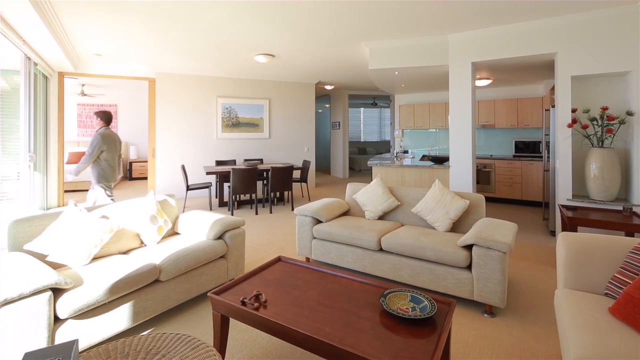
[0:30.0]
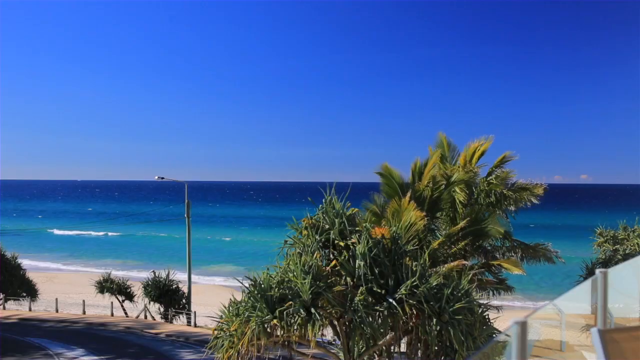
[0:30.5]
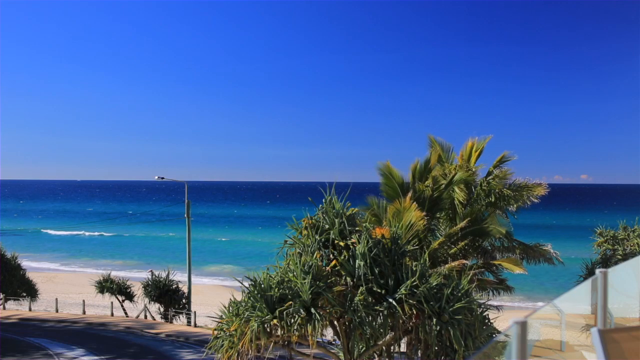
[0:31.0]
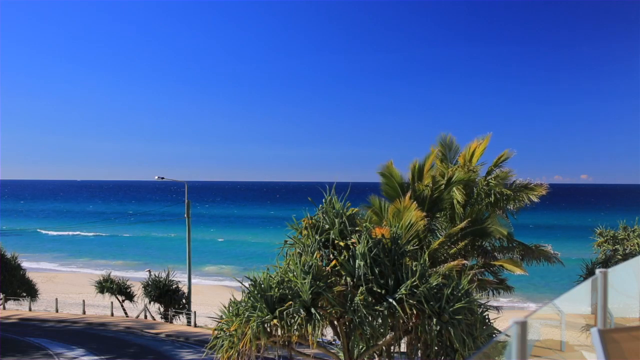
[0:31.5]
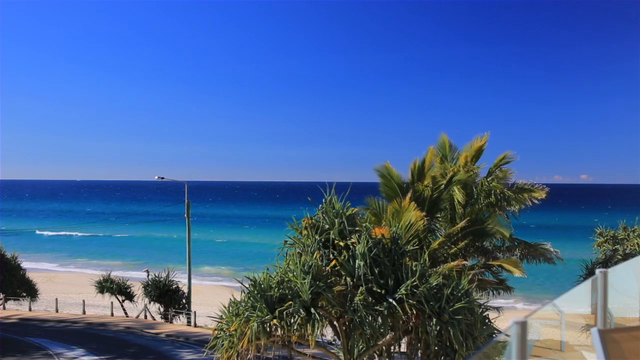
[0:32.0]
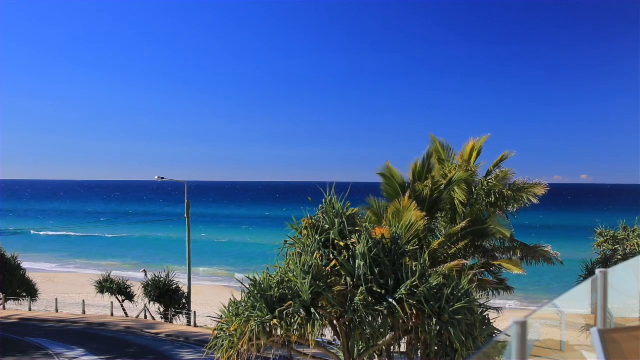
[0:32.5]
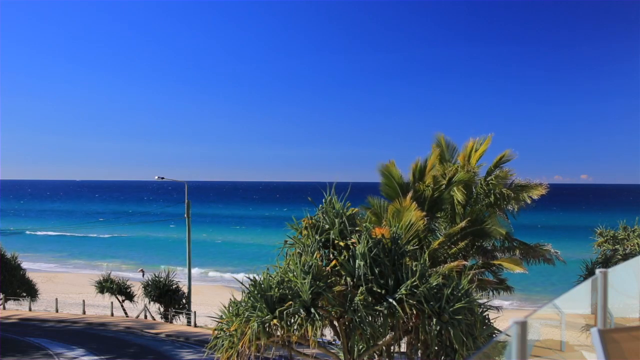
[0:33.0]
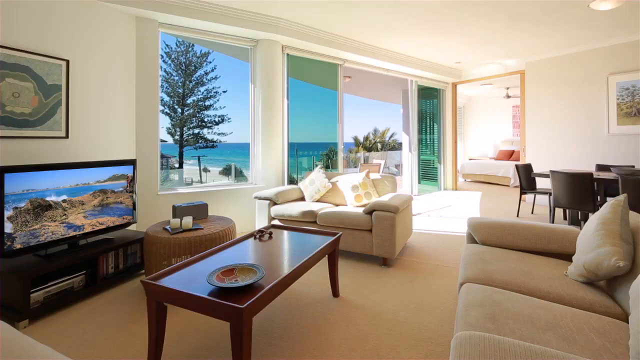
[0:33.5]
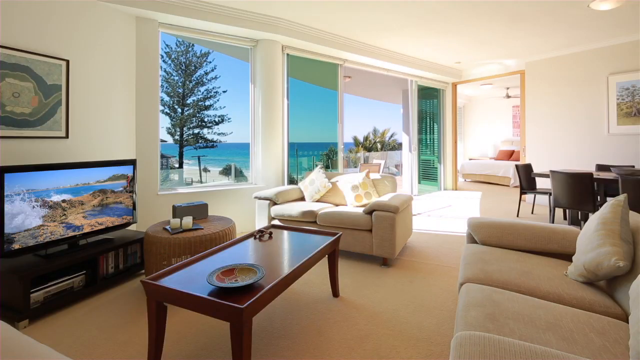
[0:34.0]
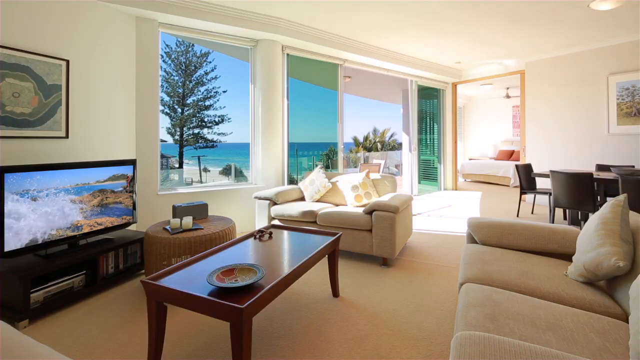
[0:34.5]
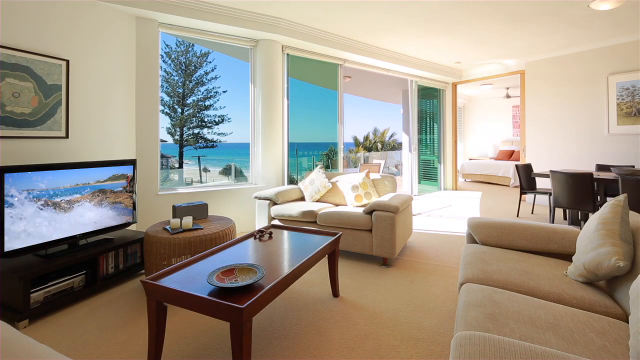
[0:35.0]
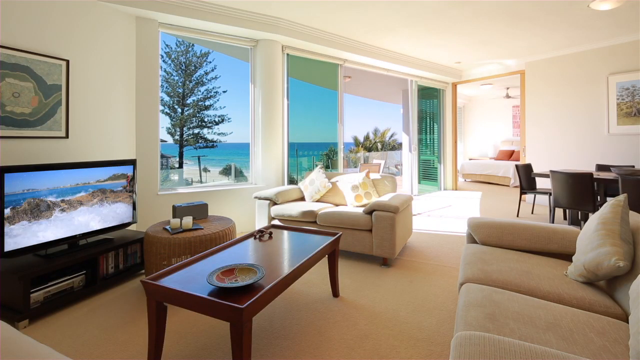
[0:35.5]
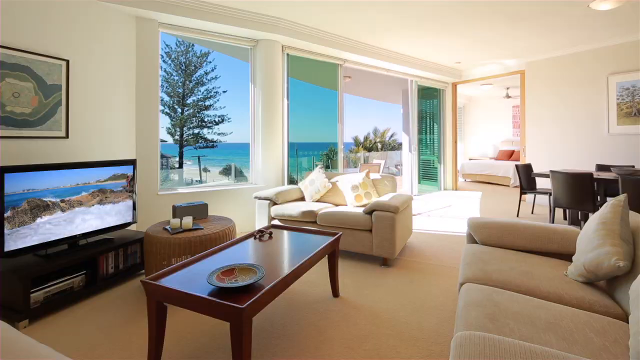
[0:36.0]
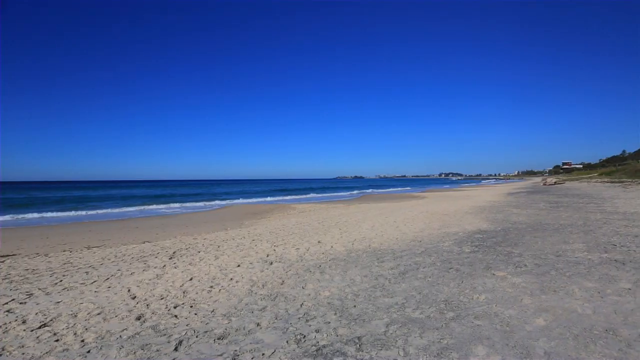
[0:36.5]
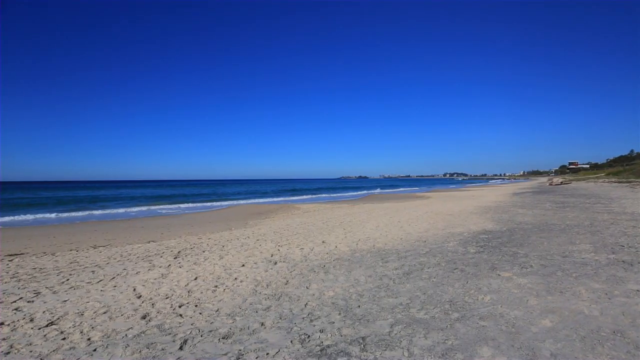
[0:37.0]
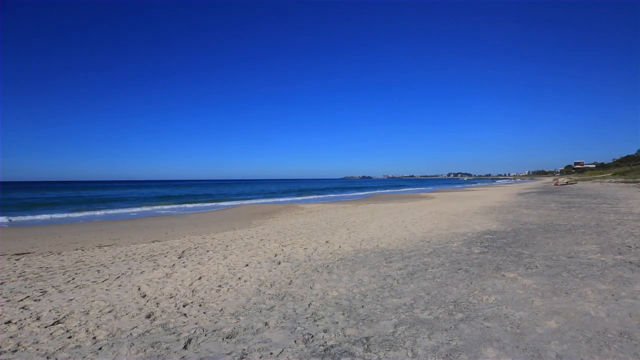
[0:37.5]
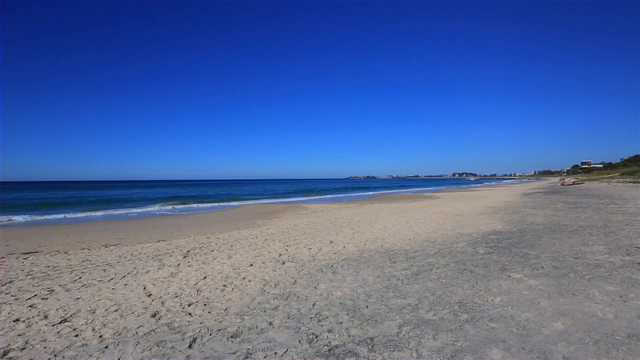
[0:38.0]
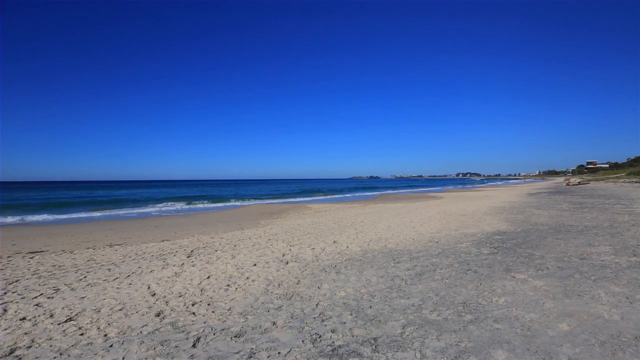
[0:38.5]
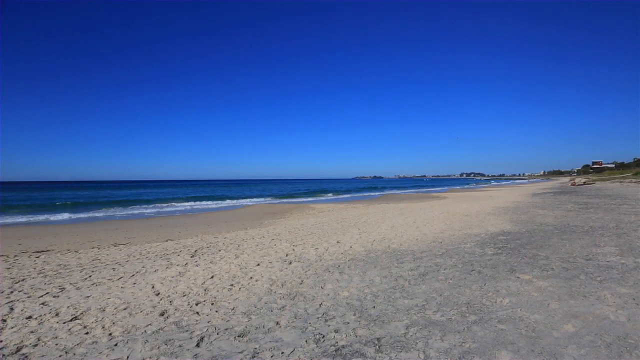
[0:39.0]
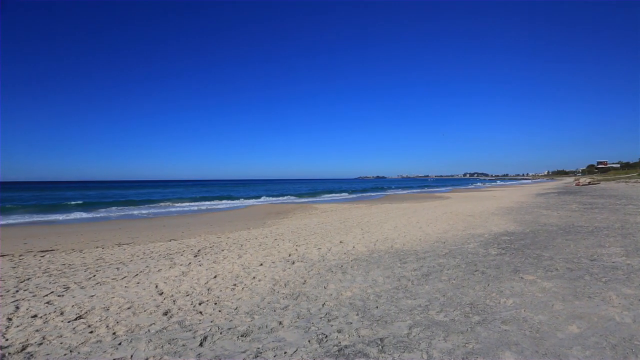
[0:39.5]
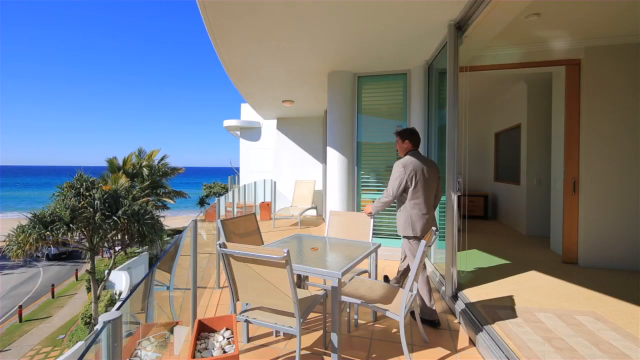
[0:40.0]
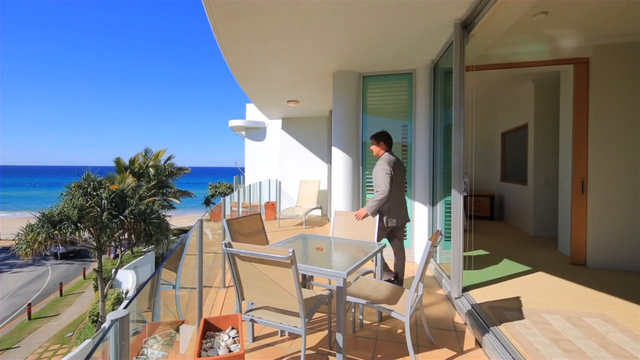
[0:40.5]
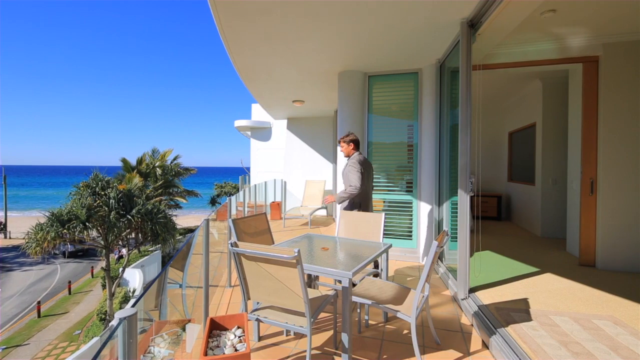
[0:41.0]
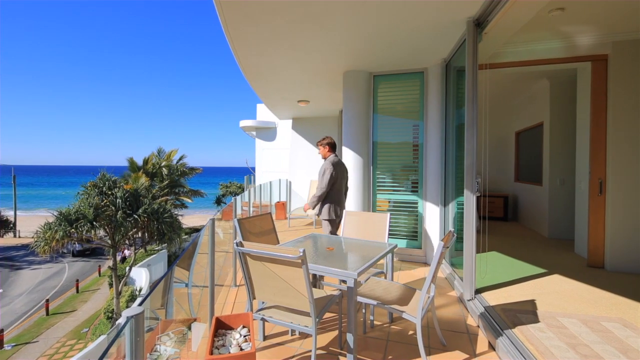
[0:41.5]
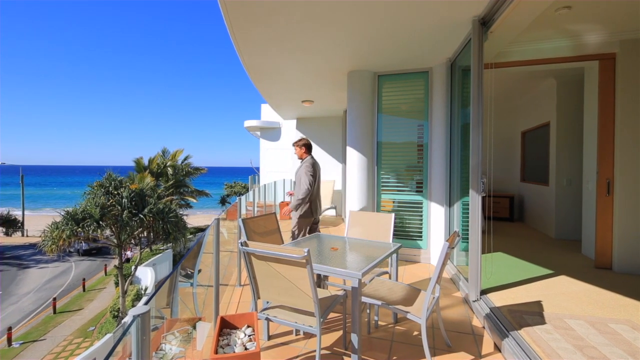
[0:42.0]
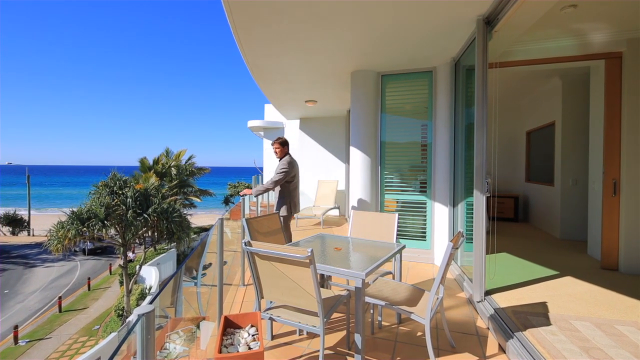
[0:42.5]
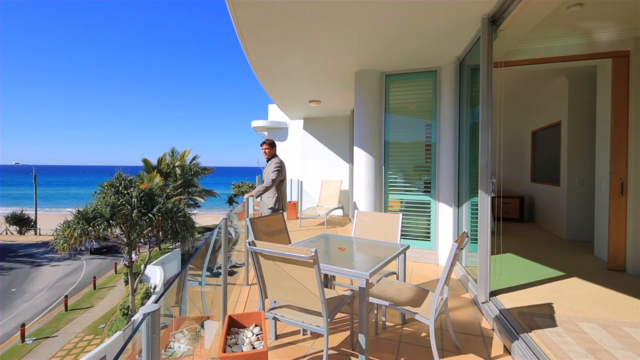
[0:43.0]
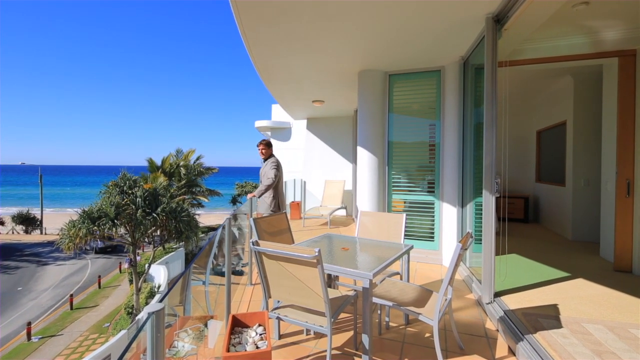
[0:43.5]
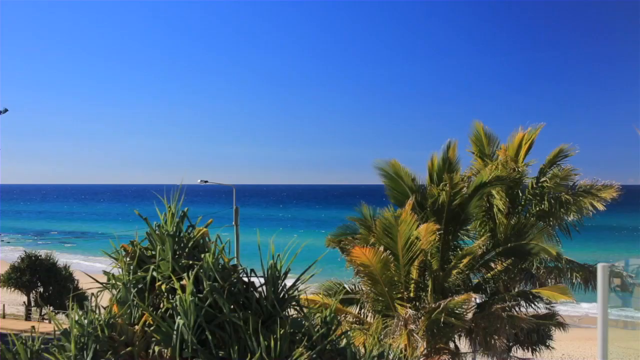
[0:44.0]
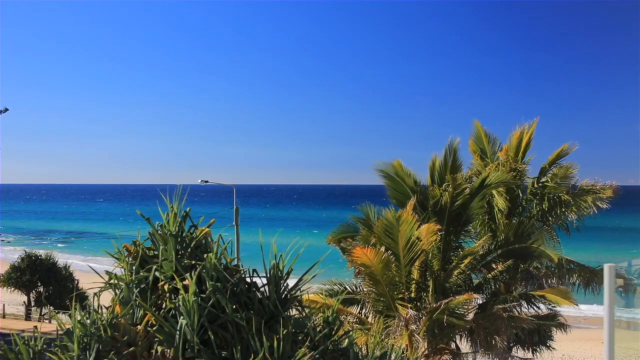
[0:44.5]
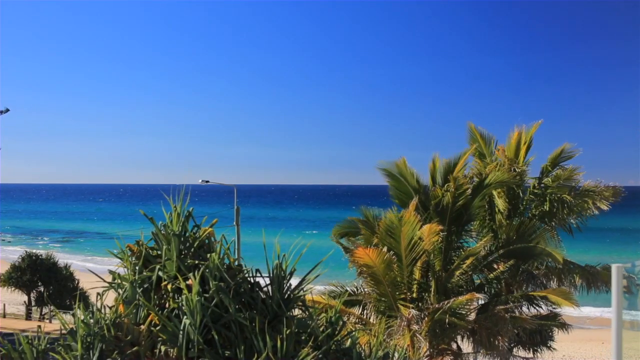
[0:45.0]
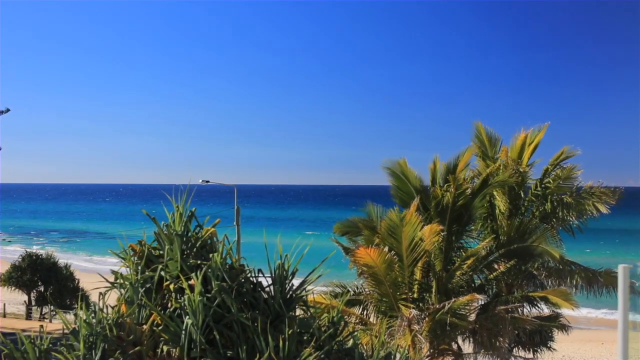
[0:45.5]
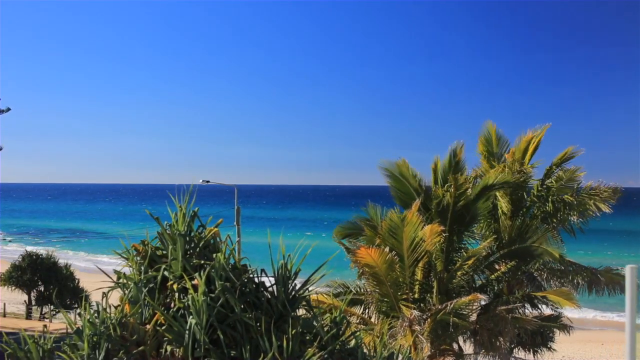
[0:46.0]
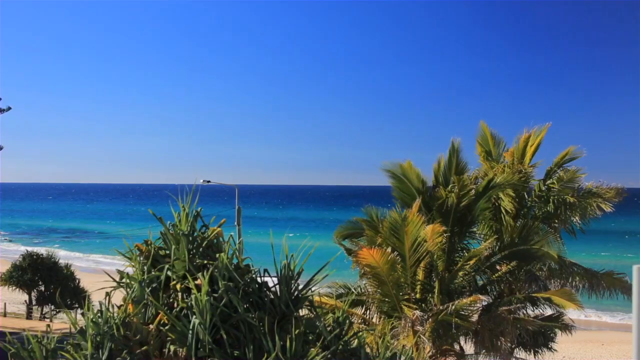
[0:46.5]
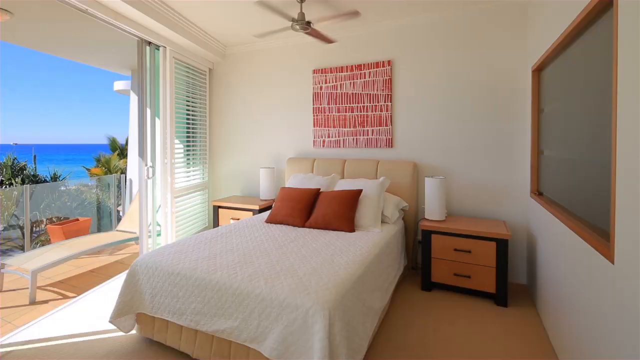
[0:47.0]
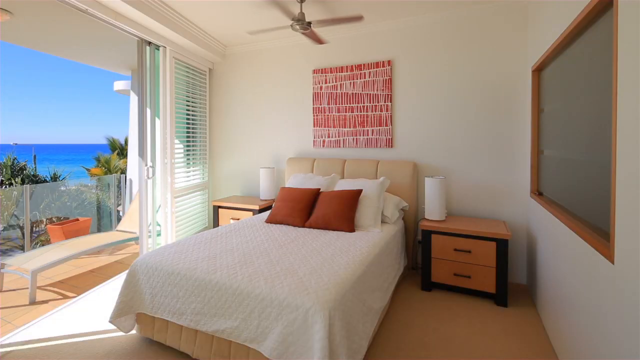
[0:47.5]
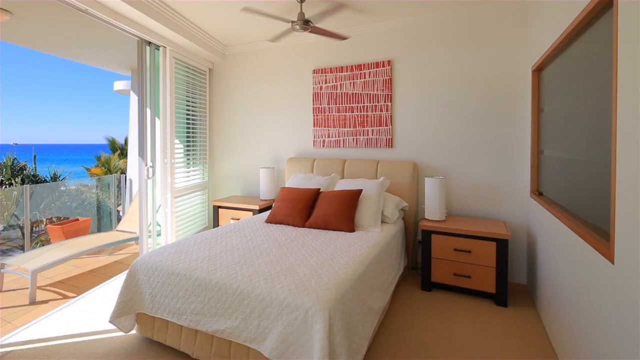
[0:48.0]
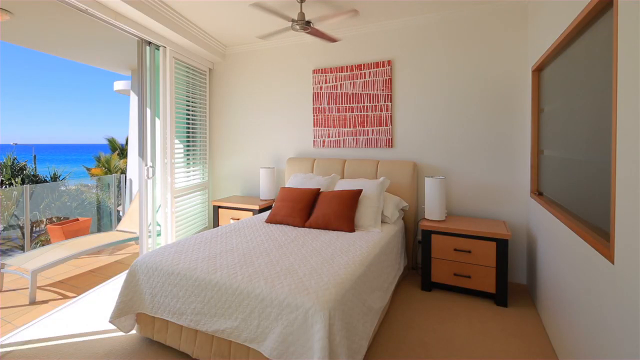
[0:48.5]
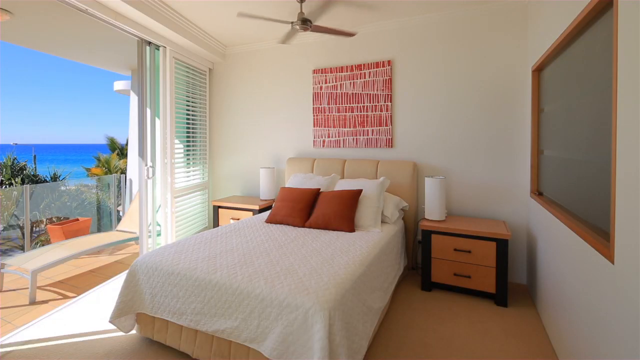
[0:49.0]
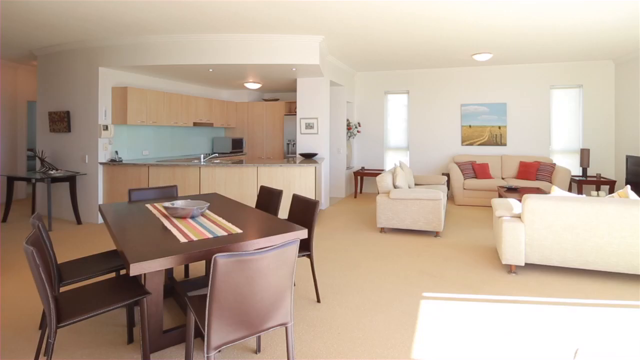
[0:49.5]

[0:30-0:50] The gentleman walks to the balcony, and the scene immediately switches to the ocean in the background, with some trees and a light pole in front. The sky is a shade of blue, and the water is deep blue in the distance, mixing in the middle with a lighter blue that makes up the rest of the water, apart from the white of the waves. The shot lingers, and the leaves of the trees move. Next is the inside of the living room, where the TV is on, on the left-hand side, showing a beach with waves crashing along rocks. A decorative bowl is on the coffee table. The couches are cream, the TV stand is dark brown, and there is a piece of art on the left wall behind the TV and another on the right wall where the dining table is. Sun is shining through the windows. A view of the beach follows: the waves are calm, and half of the view is sand while the other half is water and sky. The gentleman then walks onto the balcony and straight through to stand along the railing, and the scene immediately changes to the same view of the trees, light pole and ocean. Next is the inside of the bedroom, with a red and white art piece behind the bed, a window-type feature on the wall on the right-hand side, and two little side table drawers. There is also a balcony with a long chair. The scene then changes to a view of the kitchen, dining room and living room.